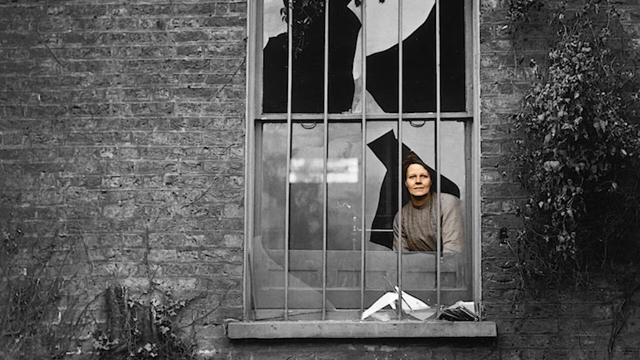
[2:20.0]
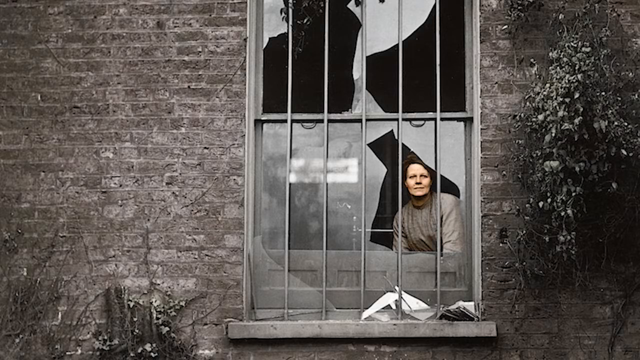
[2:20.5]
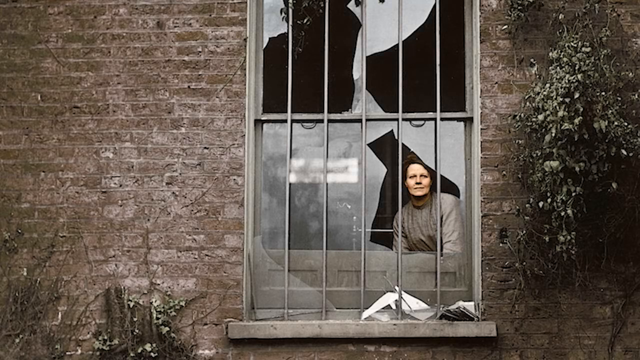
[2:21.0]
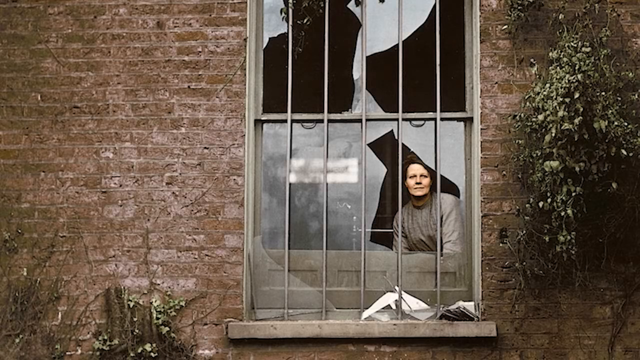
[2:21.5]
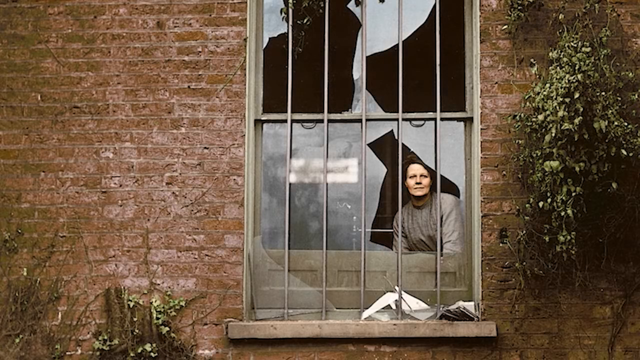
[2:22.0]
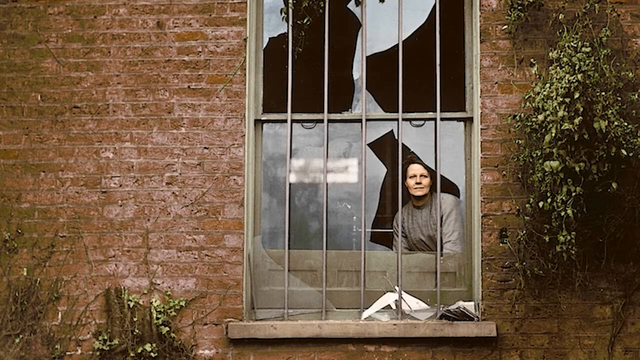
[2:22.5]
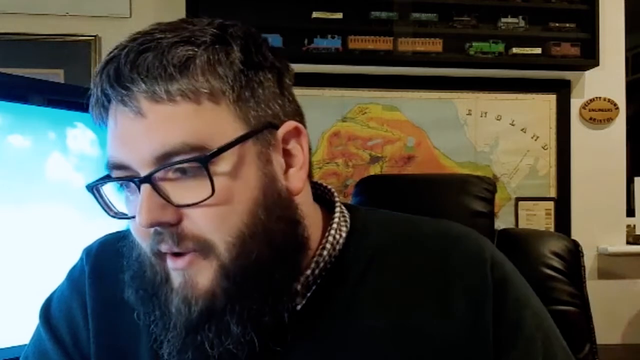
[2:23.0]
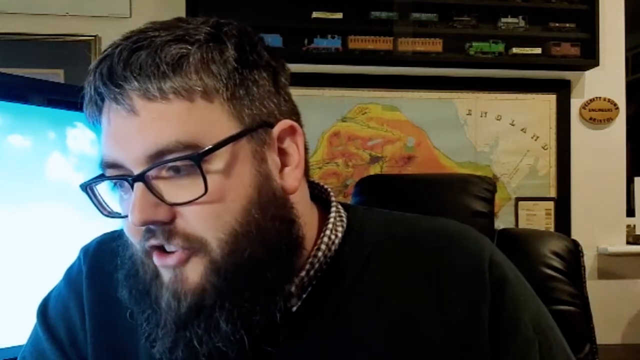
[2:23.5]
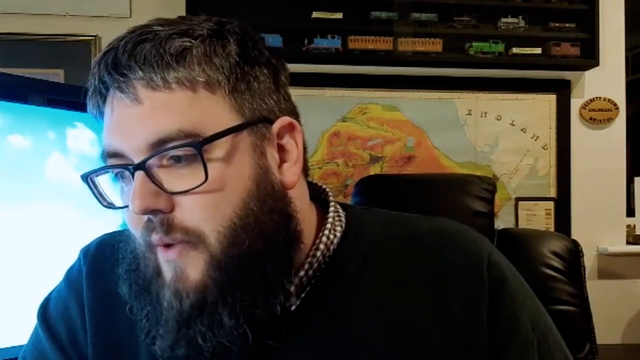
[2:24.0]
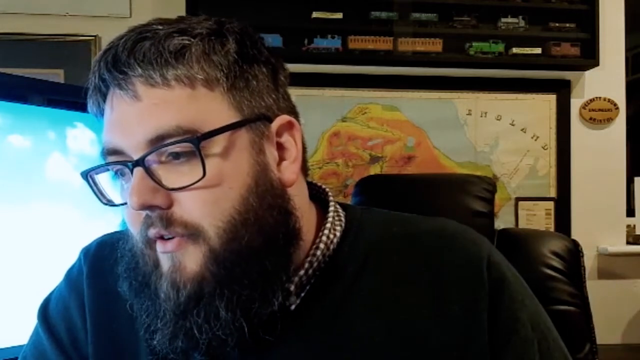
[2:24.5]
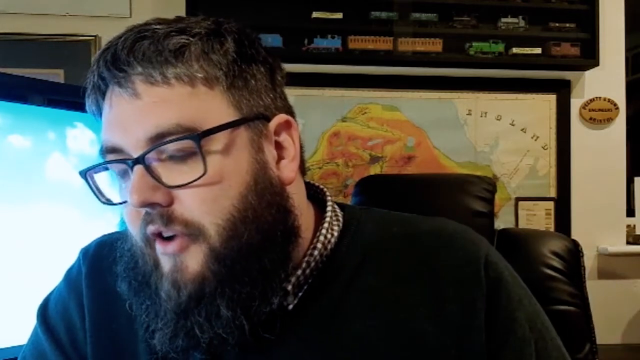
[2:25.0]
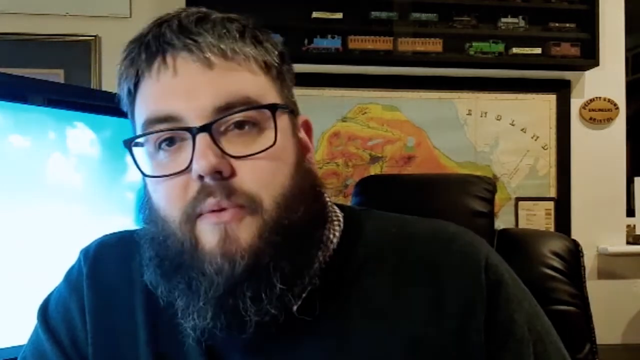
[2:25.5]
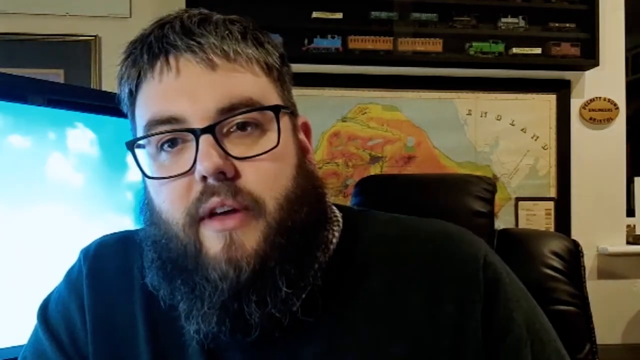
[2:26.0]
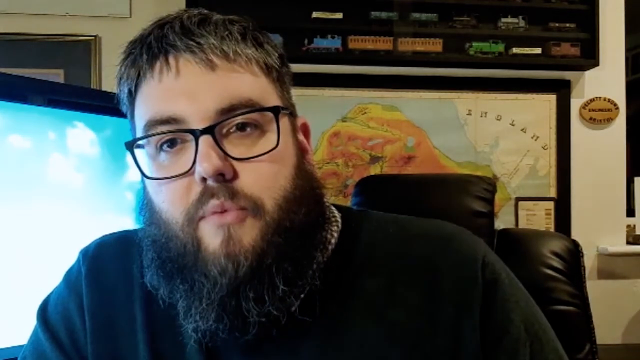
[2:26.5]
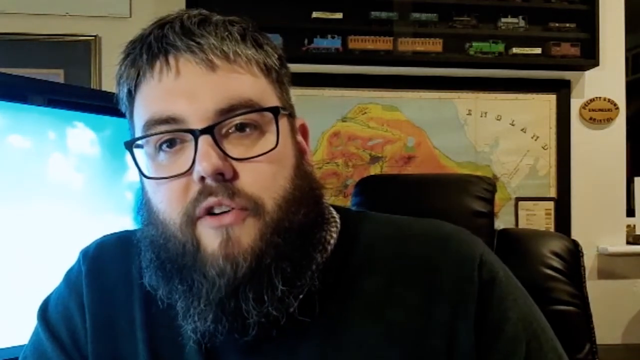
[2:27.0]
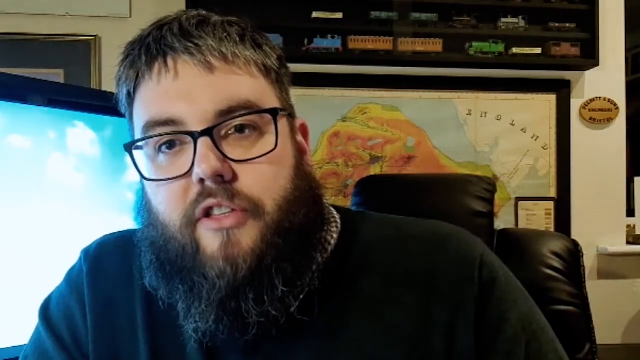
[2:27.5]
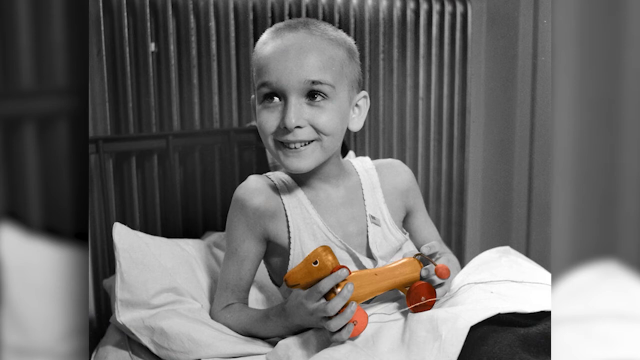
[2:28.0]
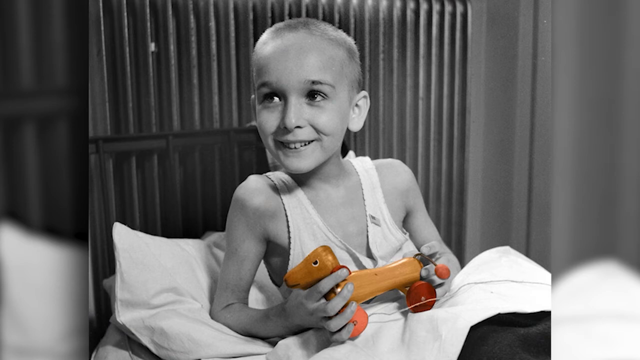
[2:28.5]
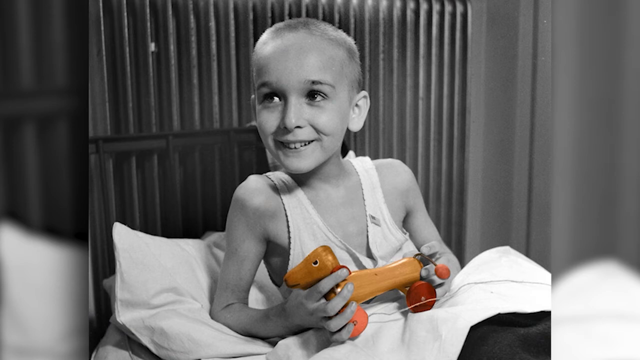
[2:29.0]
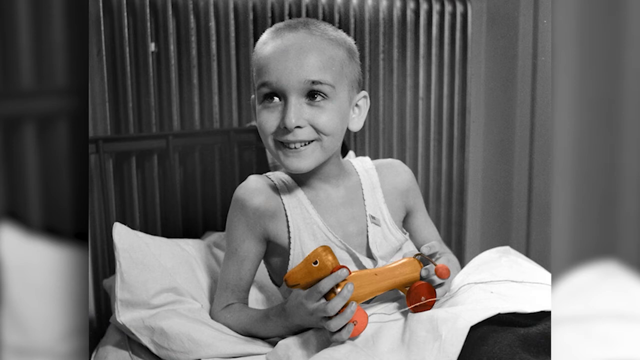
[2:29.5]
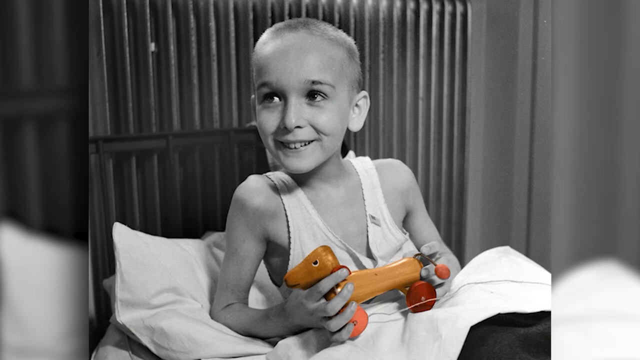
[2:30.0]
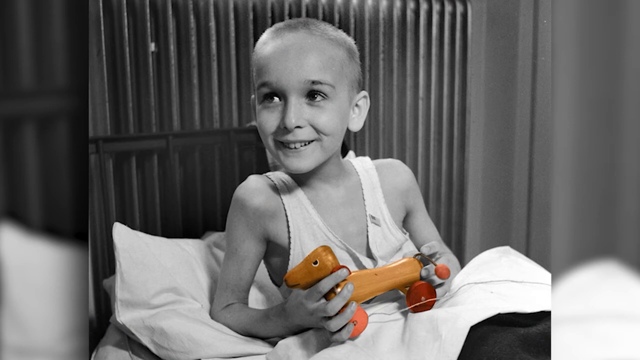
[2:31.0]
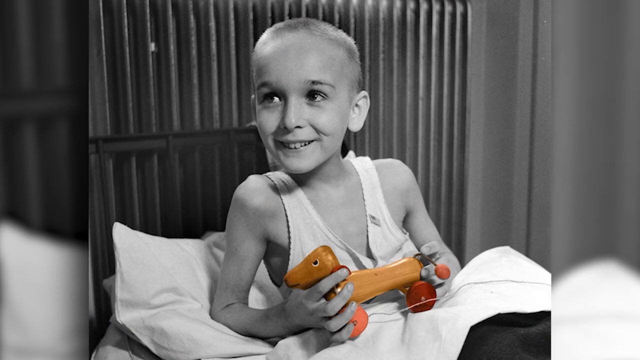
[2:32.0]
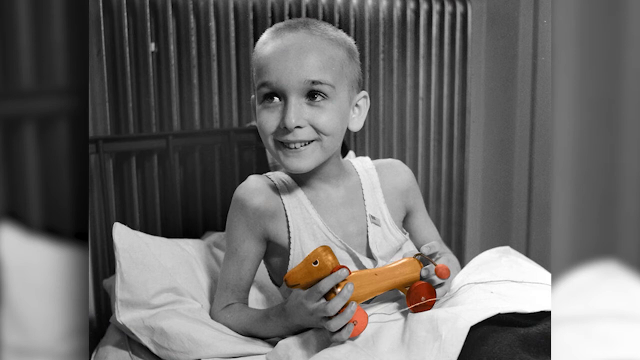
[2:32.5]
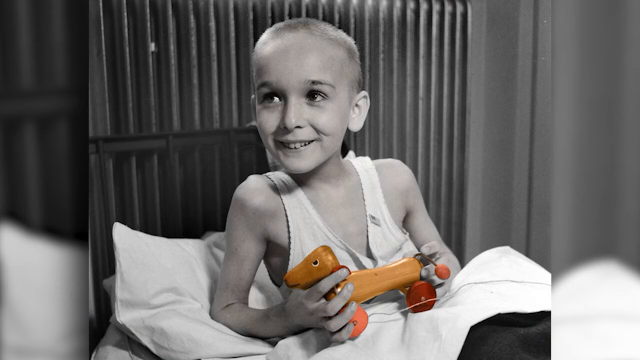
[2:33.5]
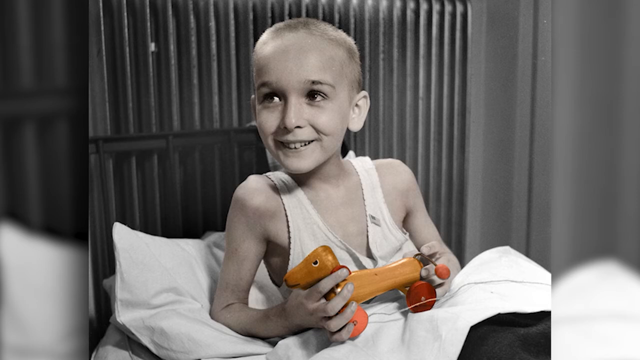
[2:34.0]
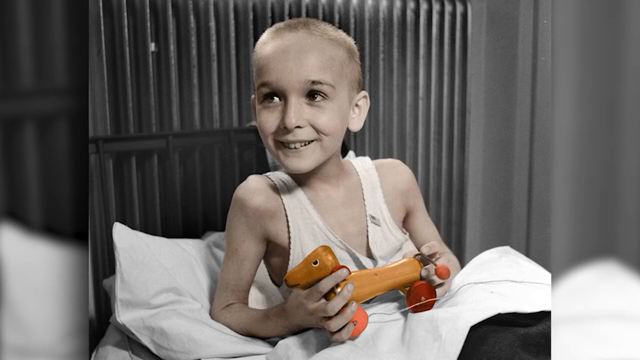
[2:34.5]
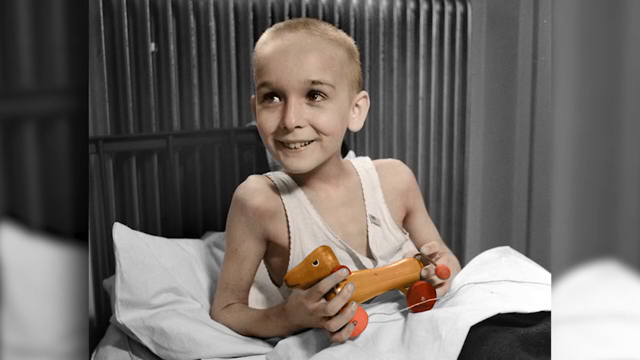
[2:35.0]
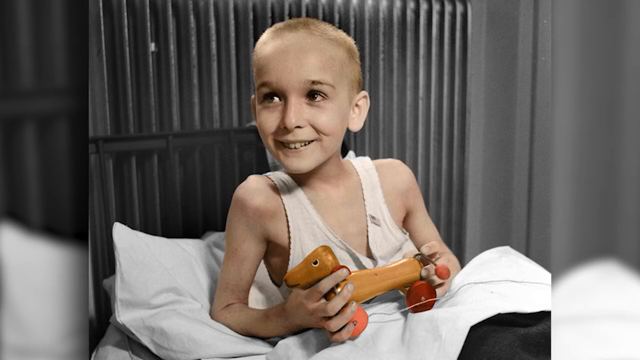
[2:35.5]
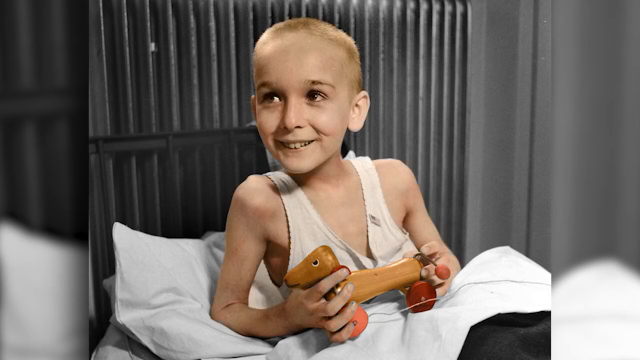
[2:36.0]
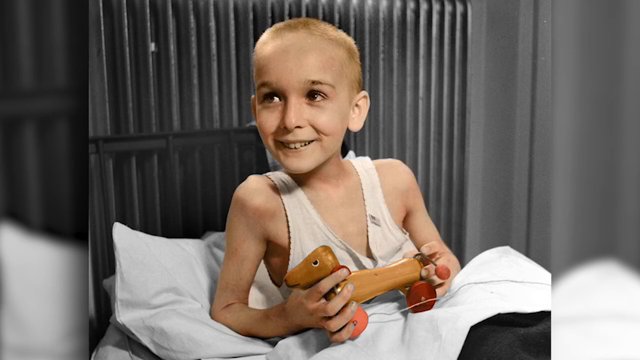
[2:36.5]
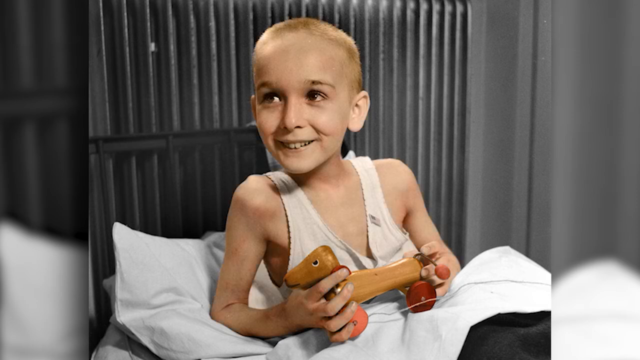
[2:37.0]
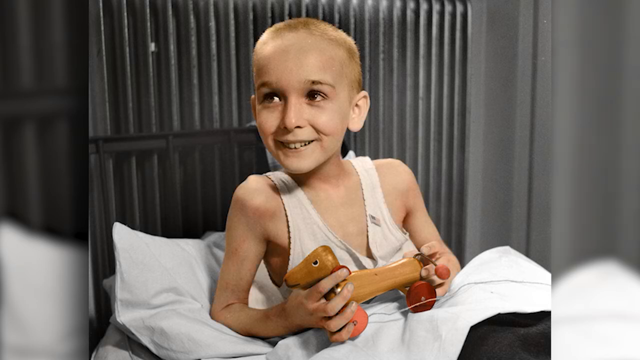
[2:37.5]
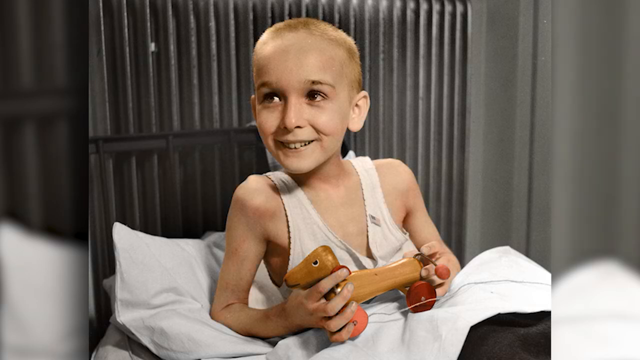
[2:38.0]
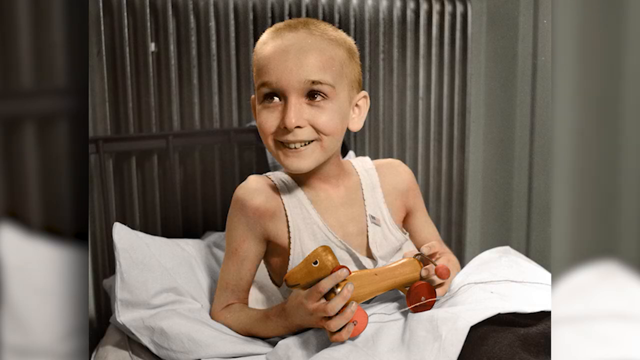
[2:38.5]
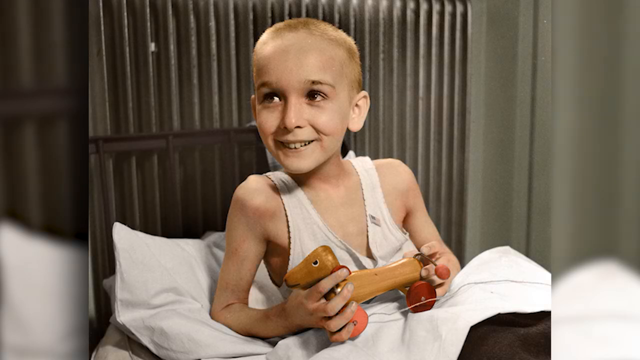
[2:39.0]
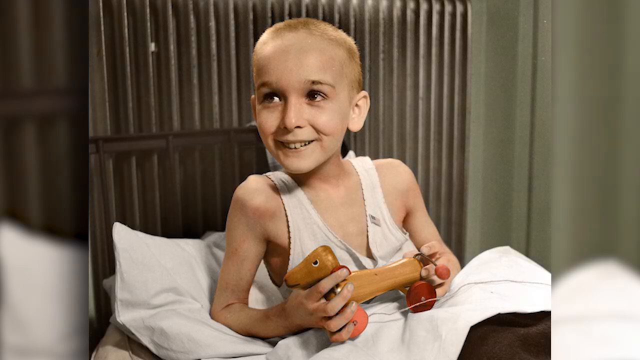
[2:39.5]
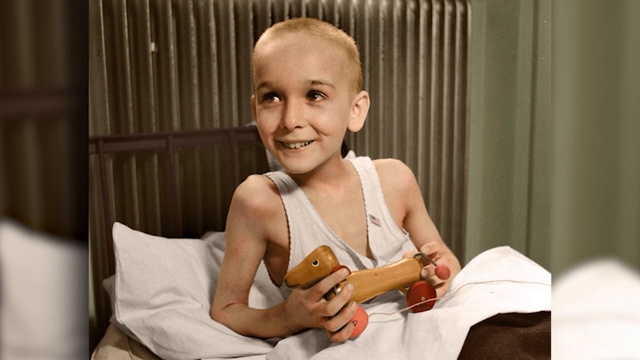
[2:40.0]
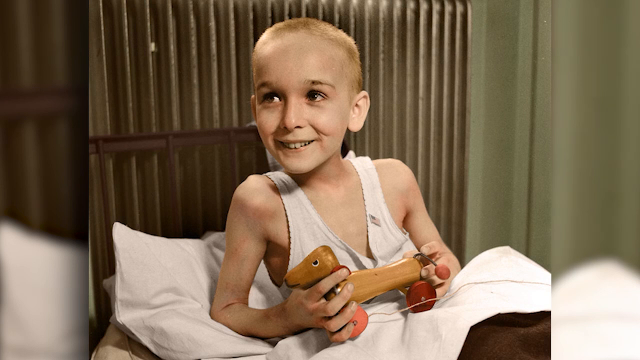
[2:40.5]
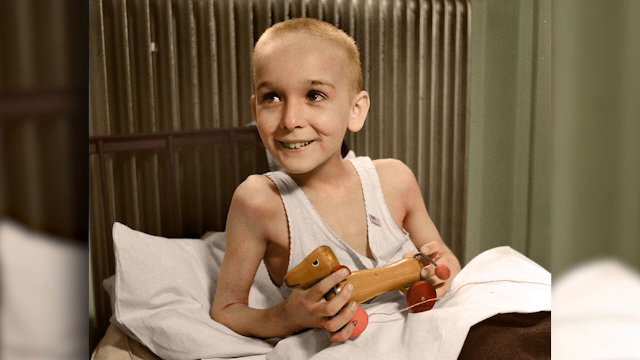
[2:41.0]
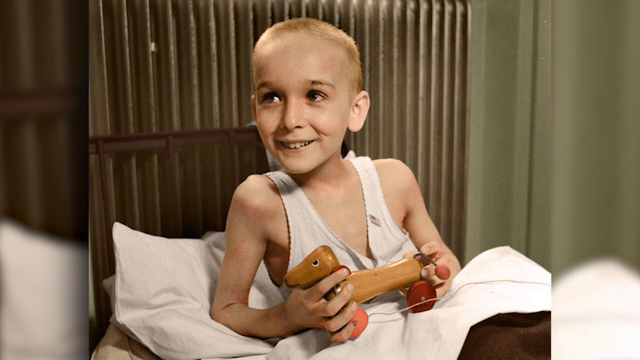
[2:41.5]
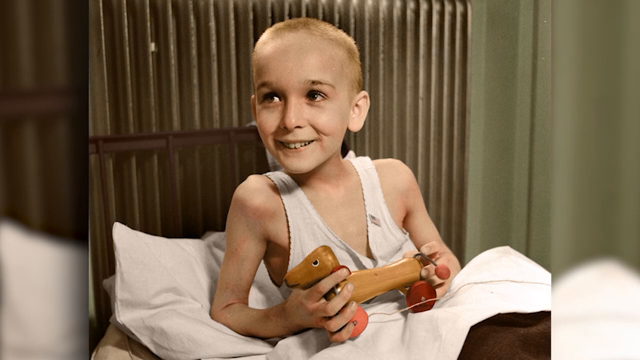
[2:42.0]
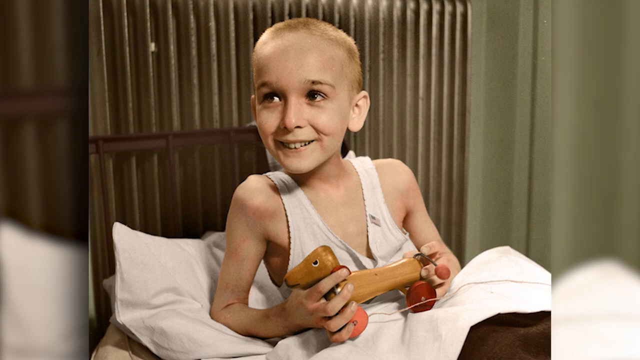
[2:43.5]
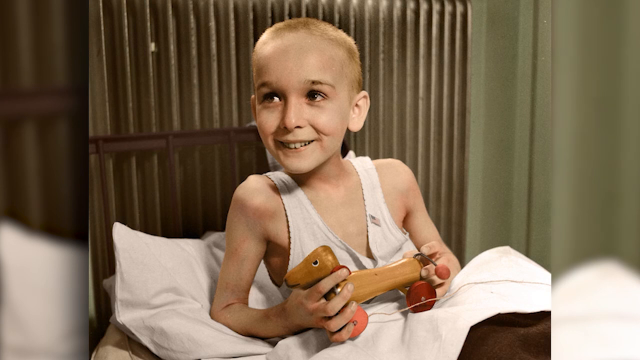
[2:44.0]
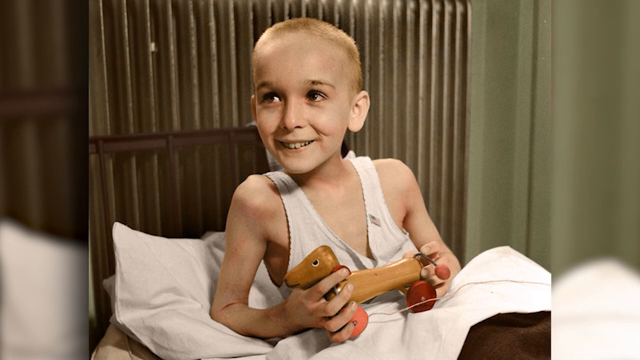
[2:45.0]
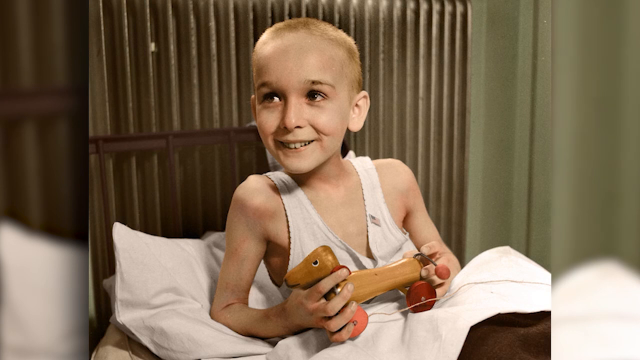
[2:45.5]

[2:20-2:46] The man talks to the camera in an office, dressed in black with black-rimmed glasses and a computer monitor to his right. A skinny kid is shown in black and white, but the toy he holds is wood, brown with red wheels. He then comes into color: he wears a tank top-like outfit and is very thin, his face looks healthy, and his body looks thin but not emaciated. At first the little boy does not come into color while the toy he holds does; then he comes into more color along with the toy, and the rest of the room has some green in it. He is on a bed of some type.